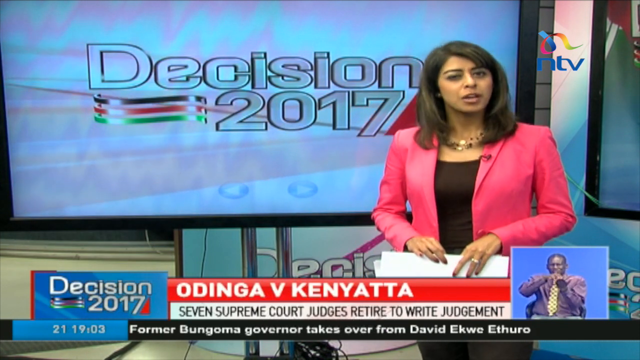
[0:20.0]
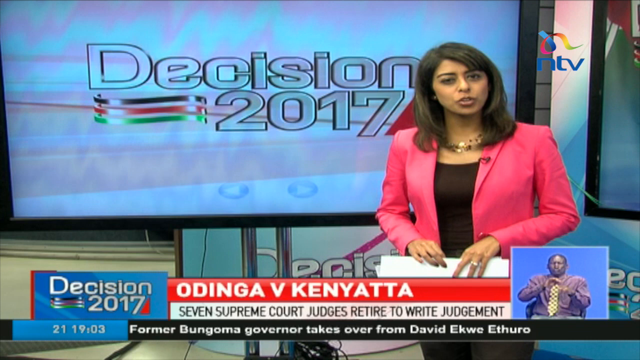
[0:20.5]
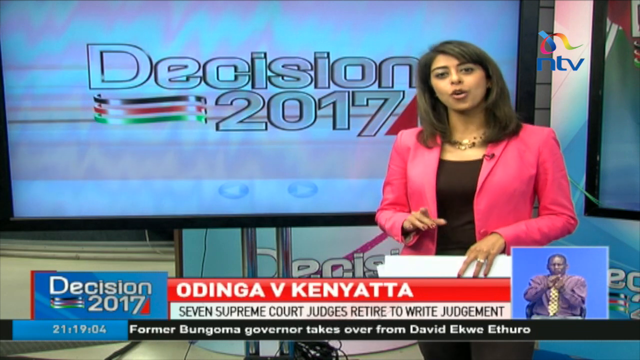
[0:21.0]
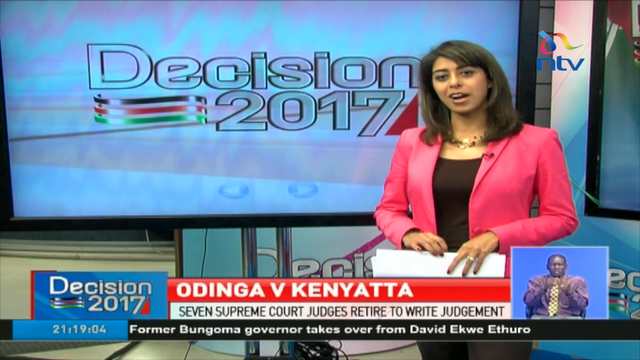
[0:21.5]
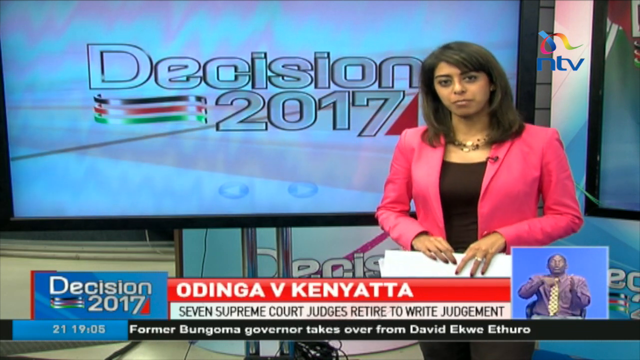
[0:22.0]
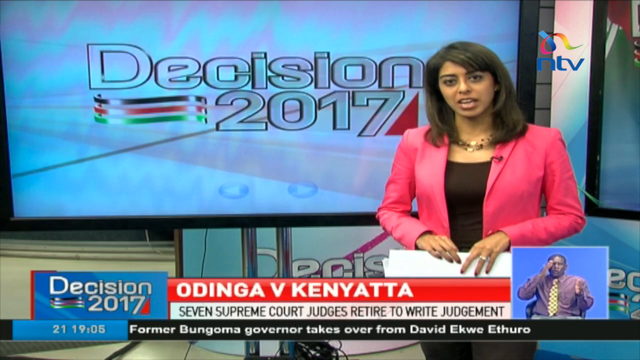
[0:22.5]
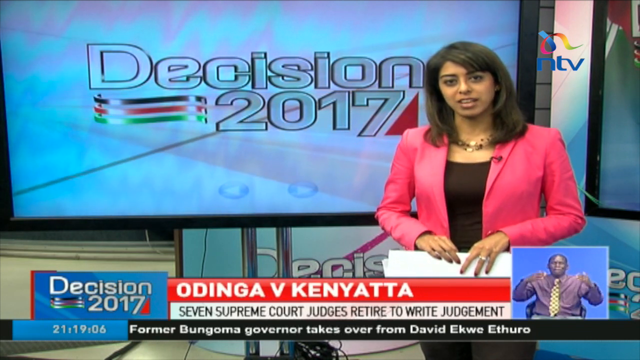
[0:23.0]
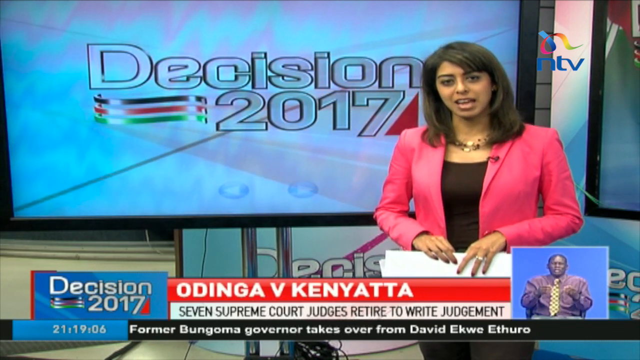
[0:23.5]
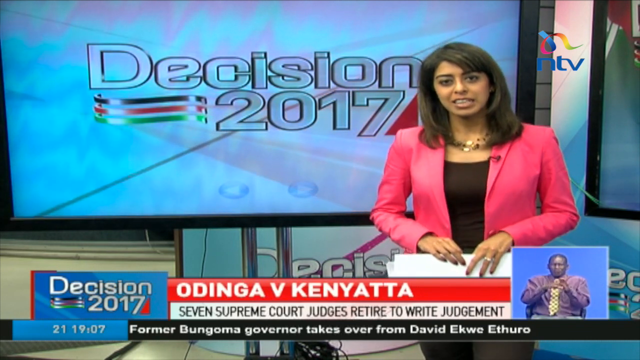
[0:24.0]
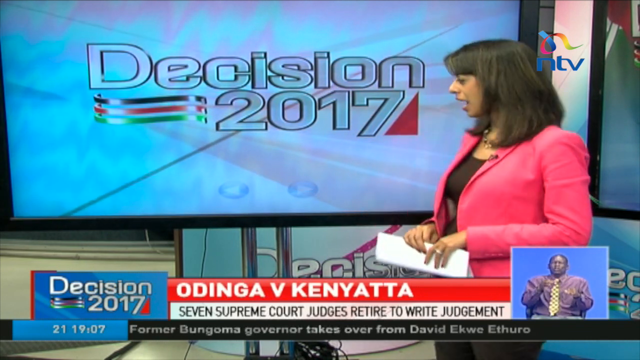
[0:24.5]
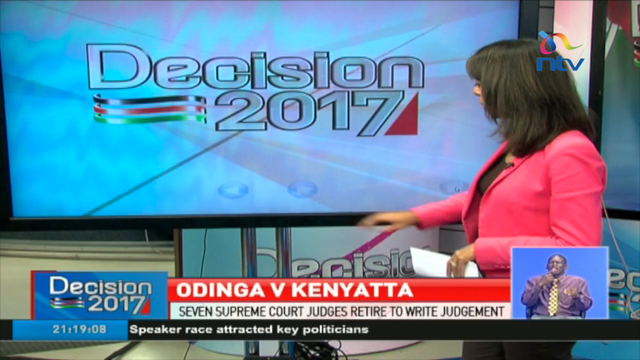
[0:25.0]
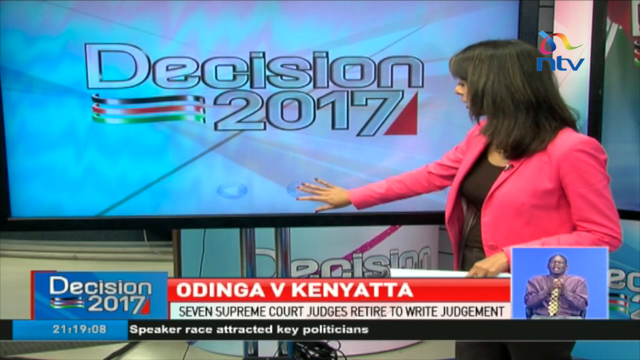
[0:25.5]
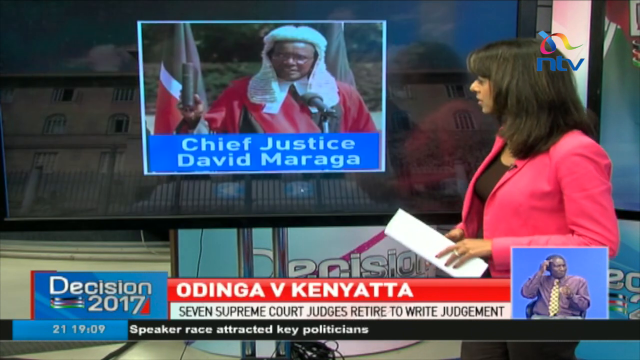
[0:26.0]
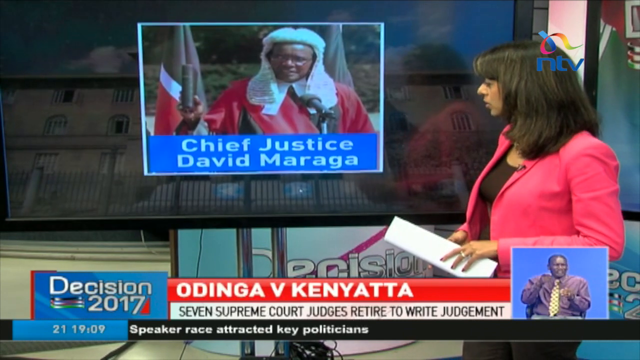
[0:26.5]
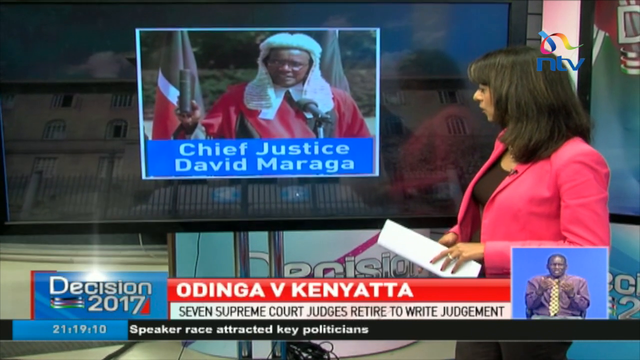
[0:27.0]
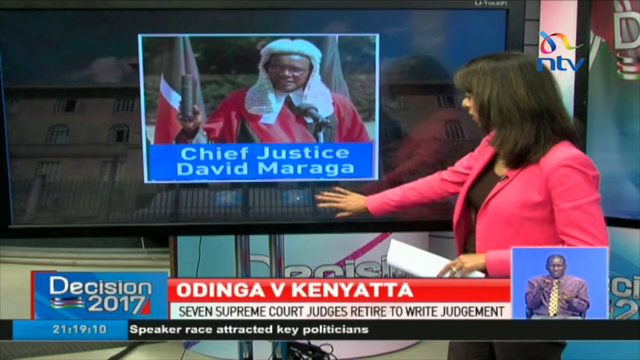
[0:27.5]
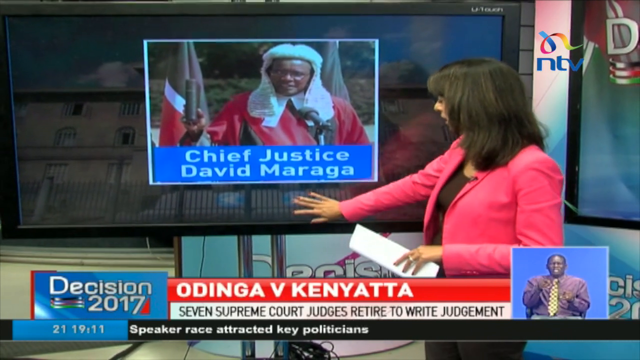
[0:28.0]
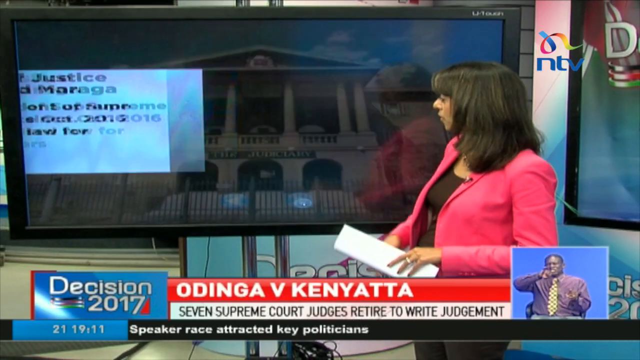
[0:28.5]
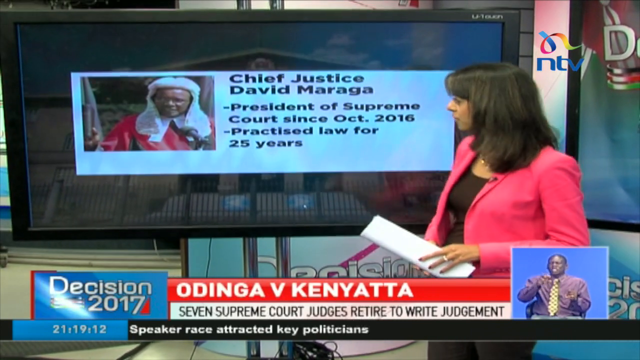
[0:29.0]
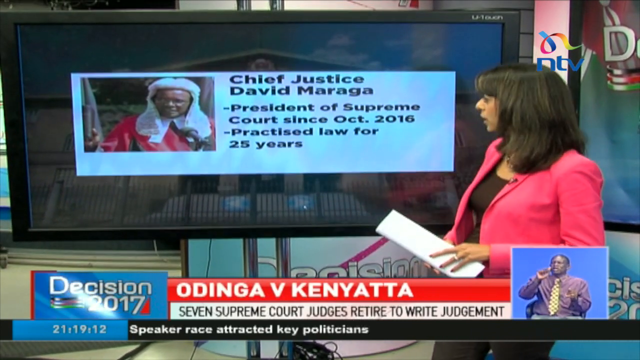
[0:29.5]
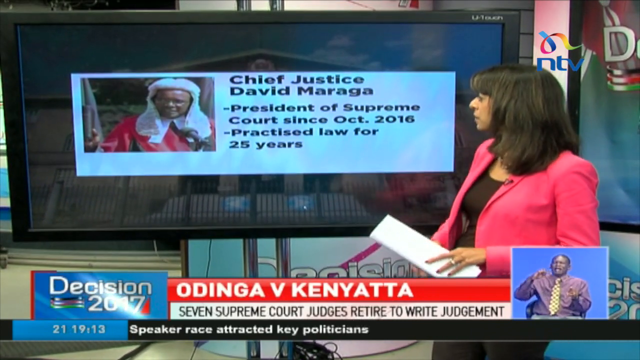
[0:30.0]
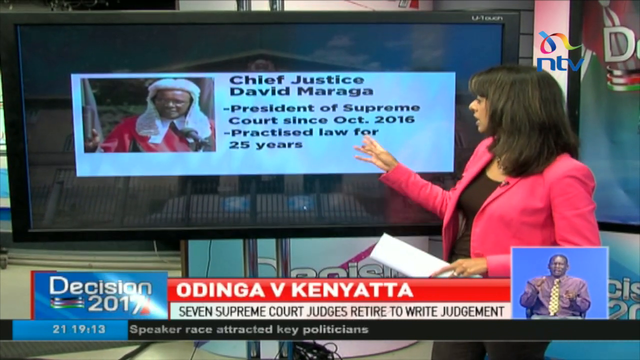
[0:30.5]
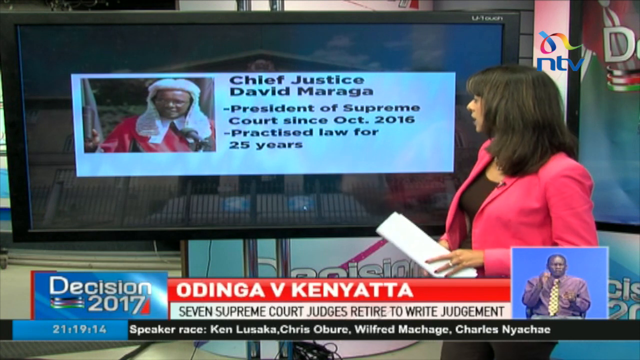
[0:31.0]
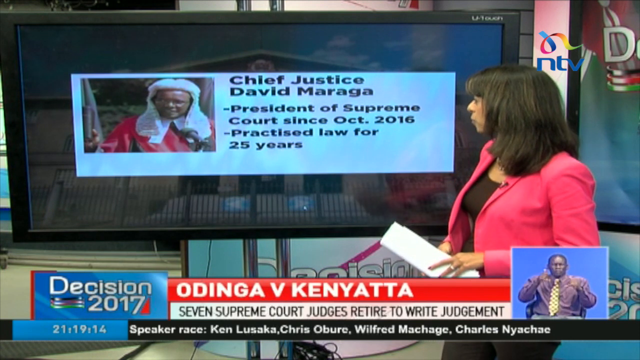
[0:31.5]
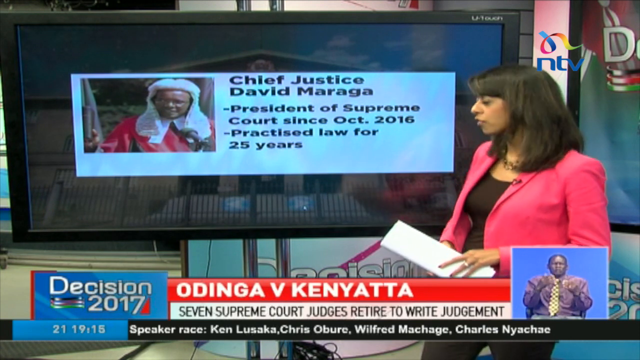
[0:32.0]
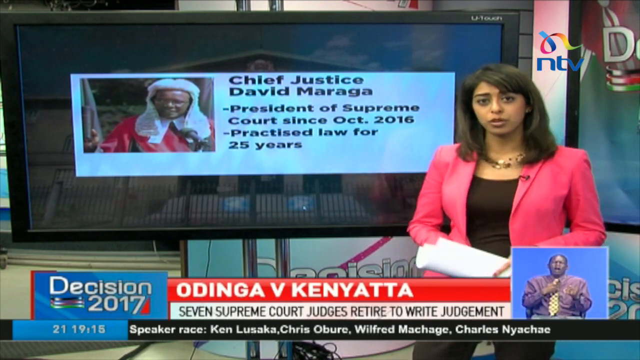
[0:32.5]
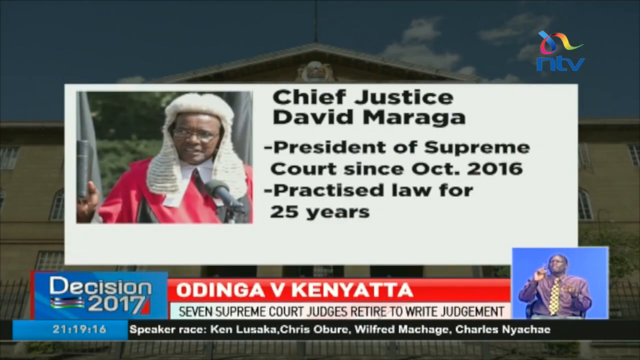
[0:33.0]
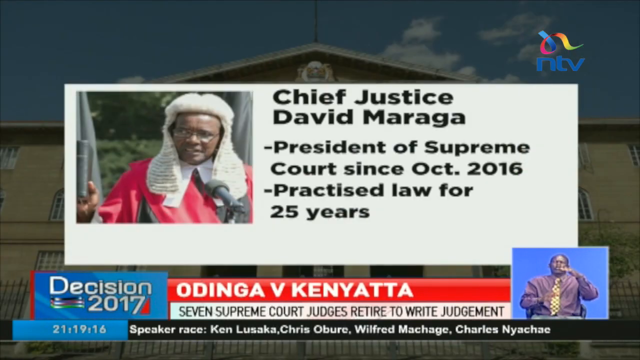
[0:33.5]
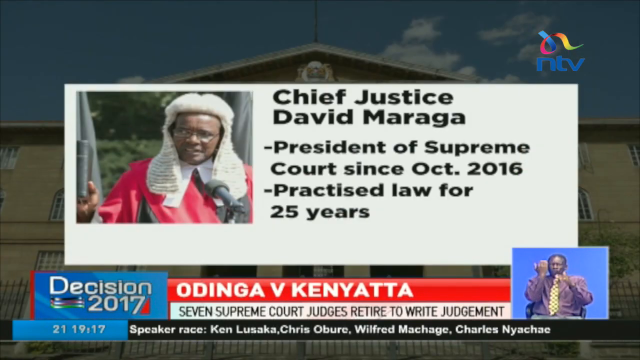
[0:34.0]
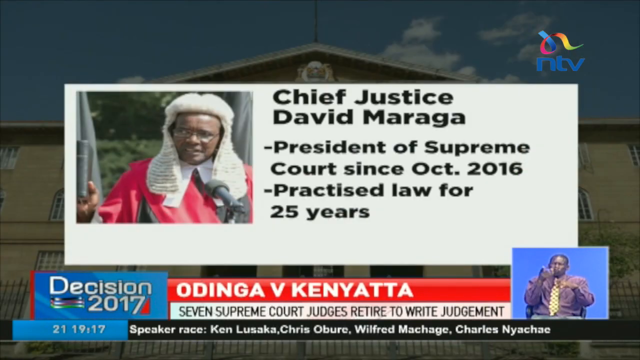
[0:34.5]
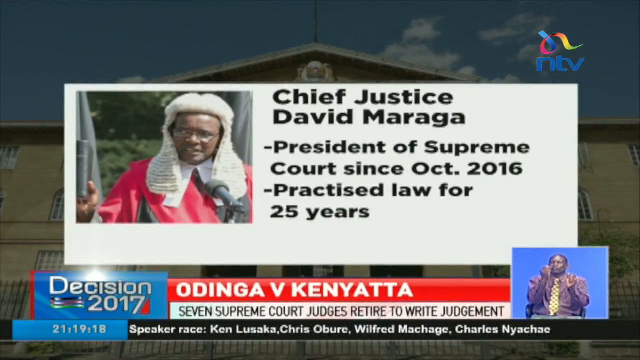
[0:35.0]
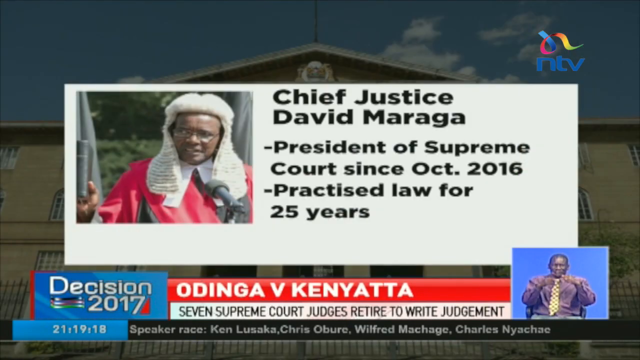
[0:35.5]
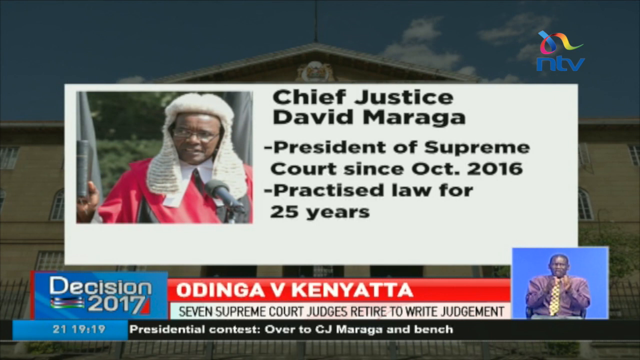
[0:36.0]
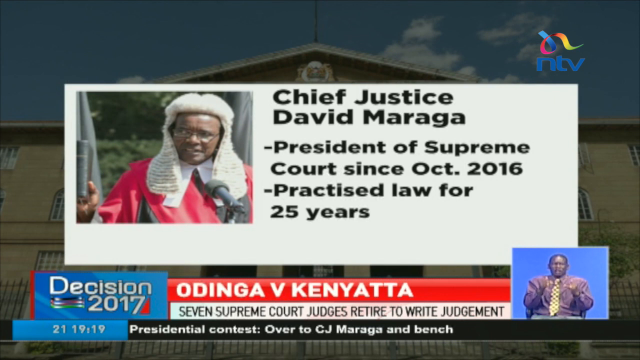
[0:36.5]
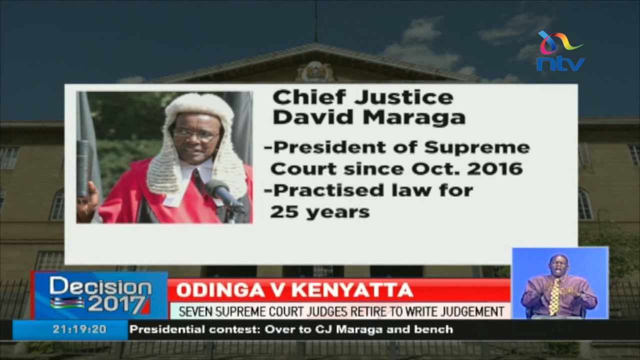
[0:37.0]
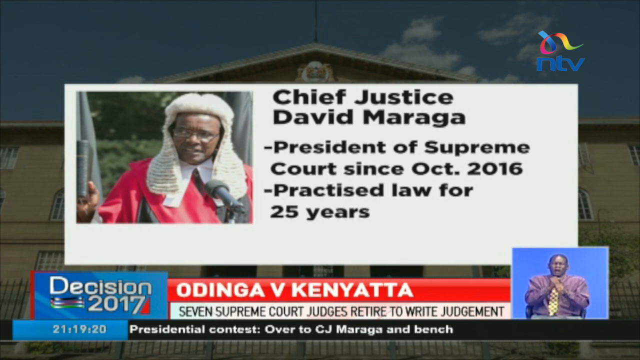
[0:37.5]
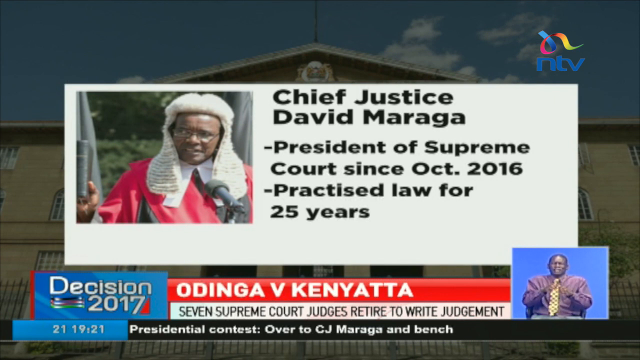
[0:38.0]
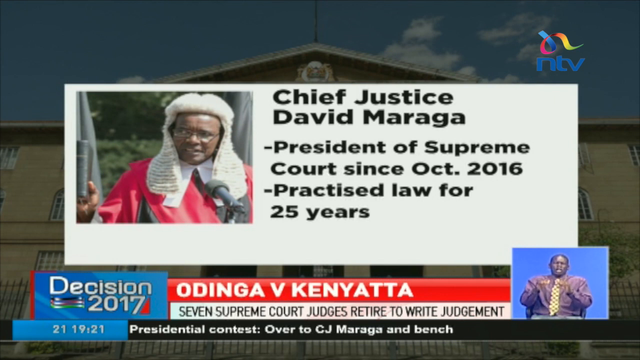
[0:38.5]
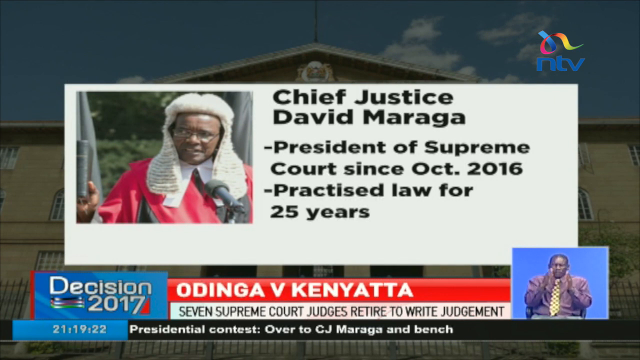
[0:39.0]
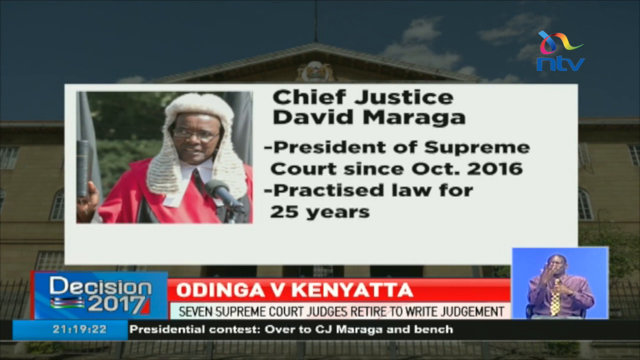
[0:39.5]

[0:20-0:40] A female news reporter stands in front of a screen that says "Decision 2017." At the bottom her name appears as "Odinga V. Kenyatta," with "Seven Supreme Court judges retired to write judgment" underneath. She holds a paper kind of slightly folded in half as she speaks, and in the bottom right corner an African man in a light purple shirt and yellow tie, in front of a blue background, does sign language. The woman turns to the screen behind her and presses the forward play button, bringing up a picture of an African man wearing a white wig of the kind some judges and barristers wear and a red robe; he appears to be standing in front of a microphone holding up a small black book. Underneath the image it says "Chief Justice David Maraga." She clicks the forward play button again, and the same image appears in a white box with text to its right: "Chief Justice David Maraga," then a dash and "President of Supreme Court since Oct. 2016," then another dash and "Practiced law for 25 years." The reporter talks while looking at the screen, motions toward the image, and turns back to the camera. The image of the man in the white wig inside the white box is then blown up to fullscreen, with the sign language interpreter still visible in the bottom right corner.